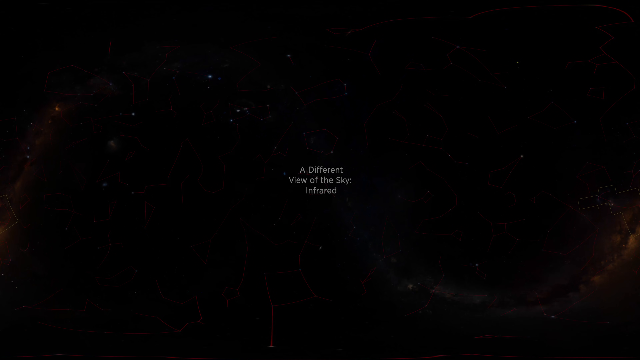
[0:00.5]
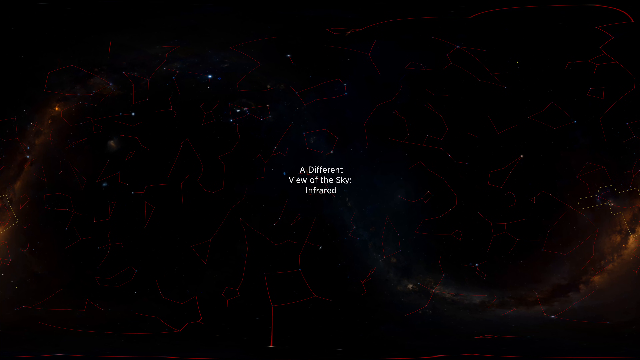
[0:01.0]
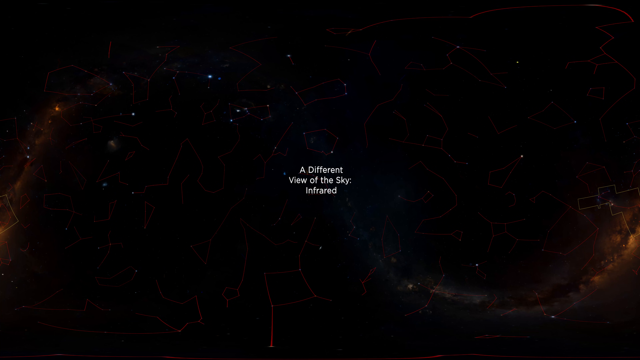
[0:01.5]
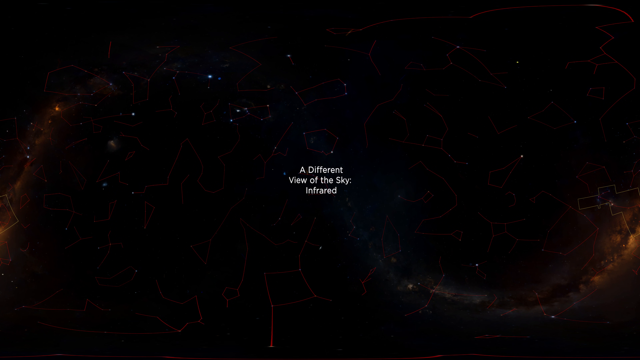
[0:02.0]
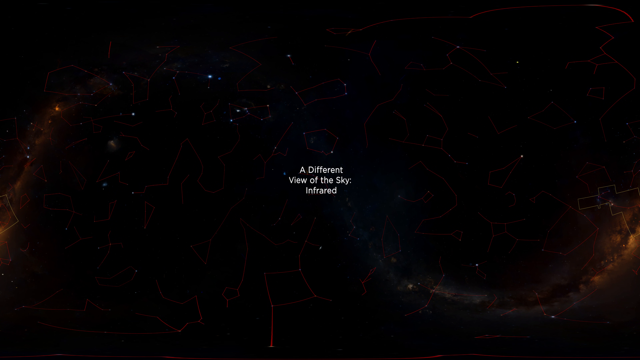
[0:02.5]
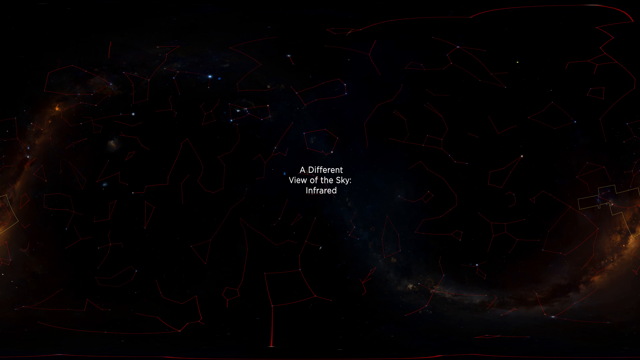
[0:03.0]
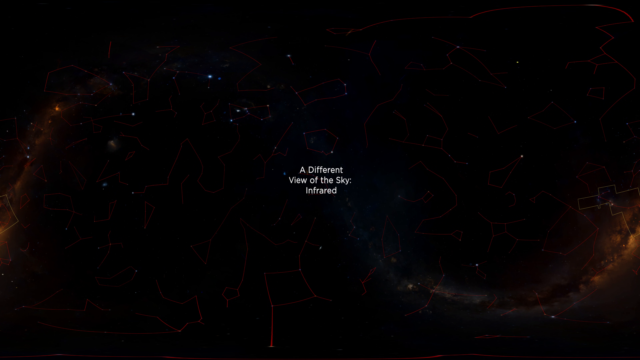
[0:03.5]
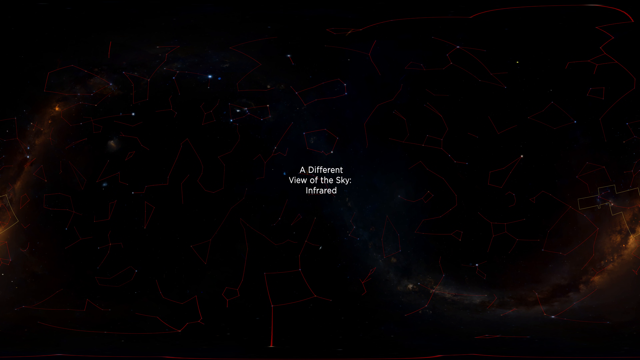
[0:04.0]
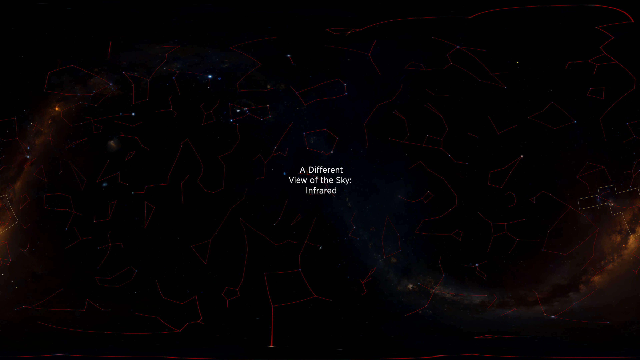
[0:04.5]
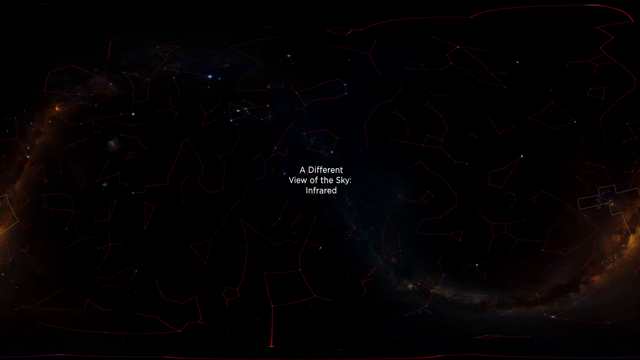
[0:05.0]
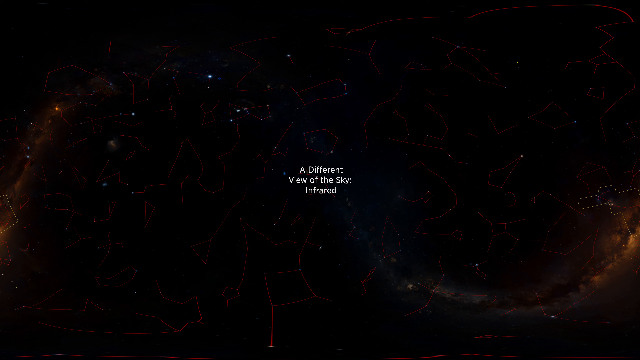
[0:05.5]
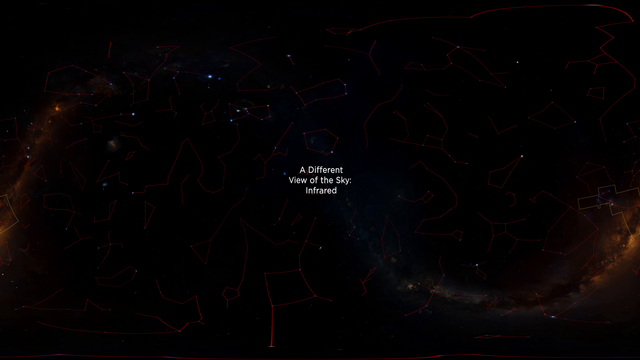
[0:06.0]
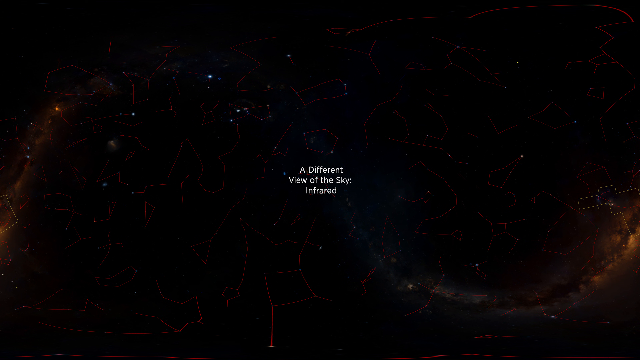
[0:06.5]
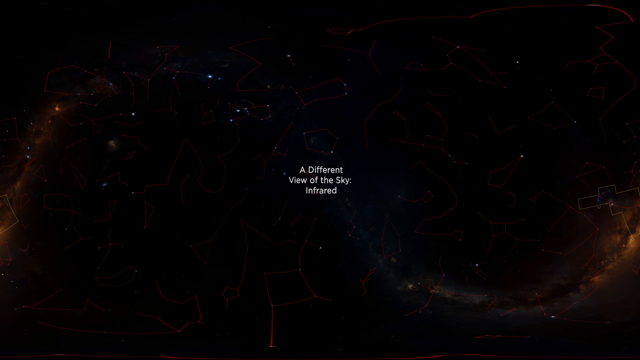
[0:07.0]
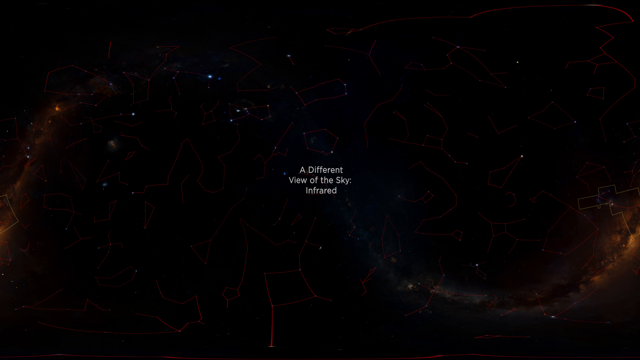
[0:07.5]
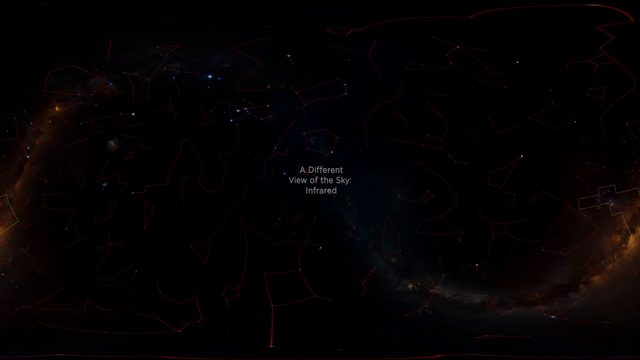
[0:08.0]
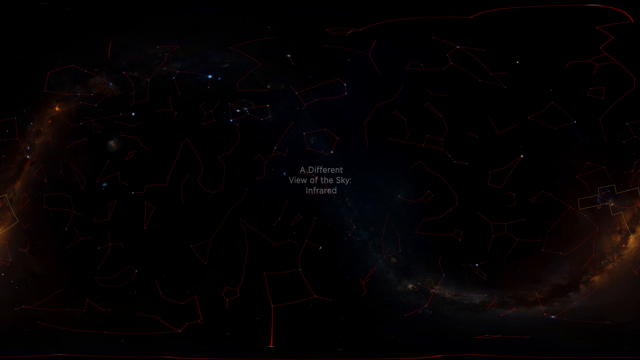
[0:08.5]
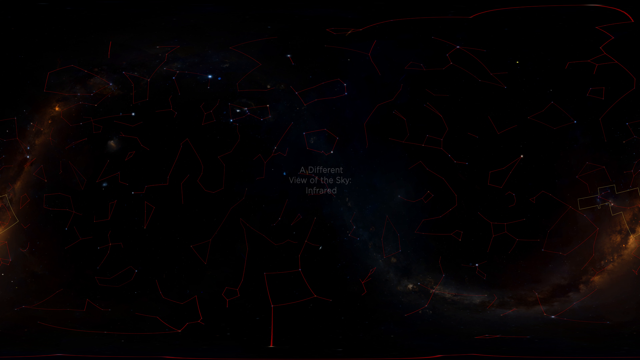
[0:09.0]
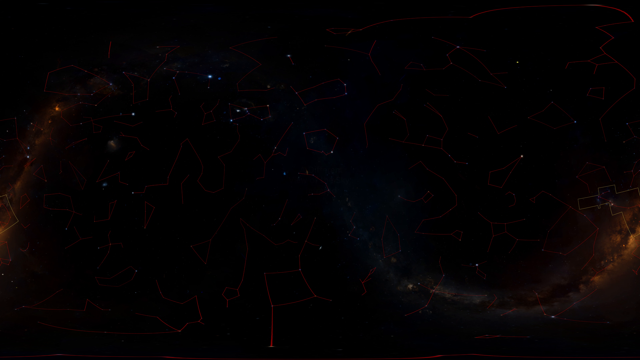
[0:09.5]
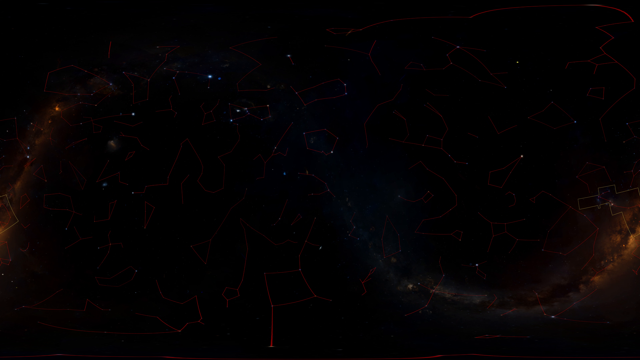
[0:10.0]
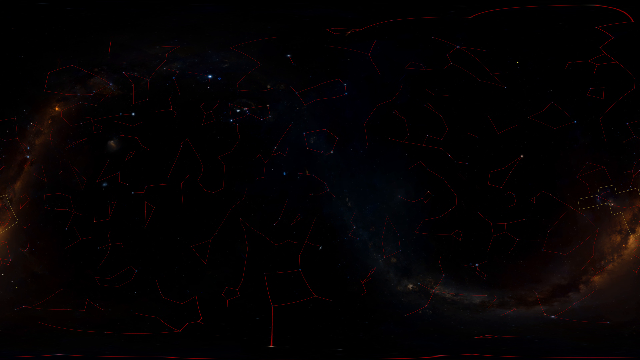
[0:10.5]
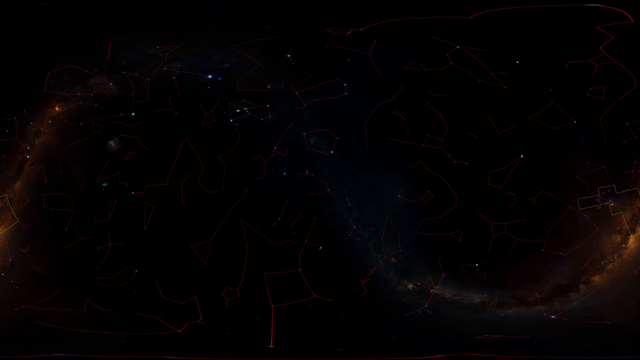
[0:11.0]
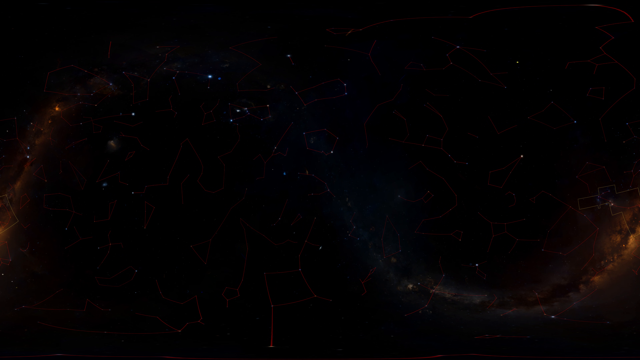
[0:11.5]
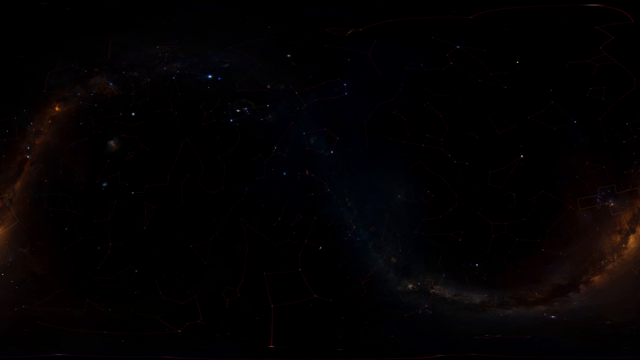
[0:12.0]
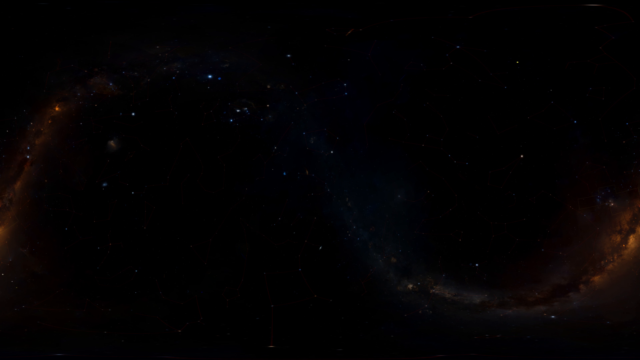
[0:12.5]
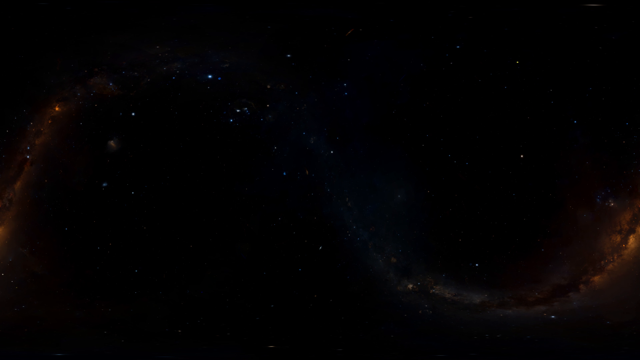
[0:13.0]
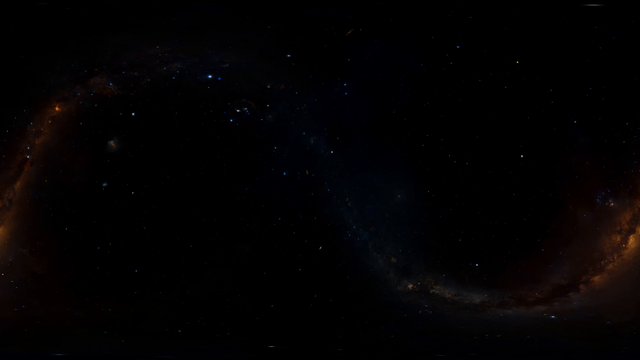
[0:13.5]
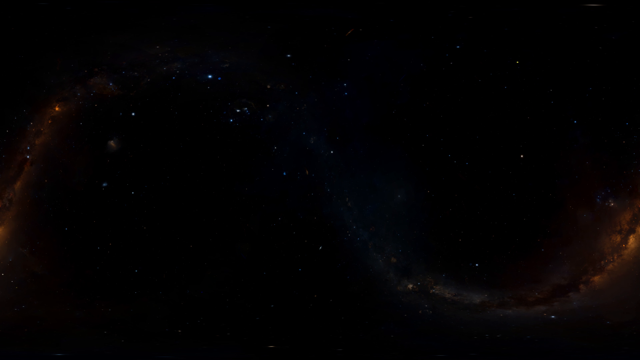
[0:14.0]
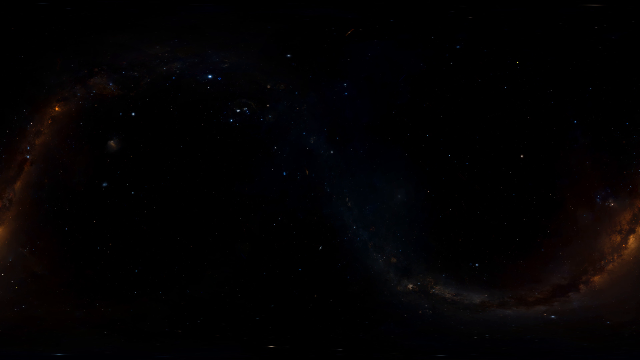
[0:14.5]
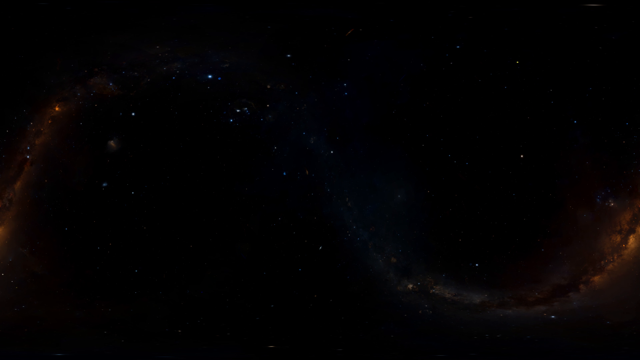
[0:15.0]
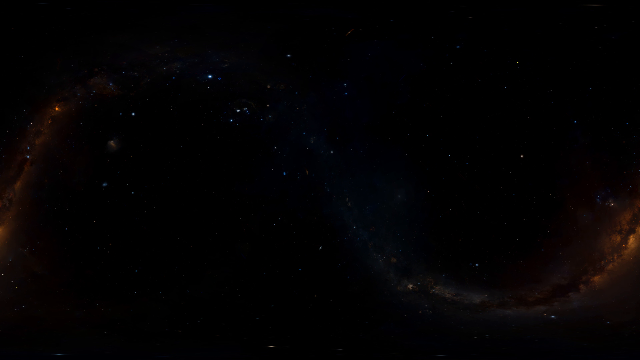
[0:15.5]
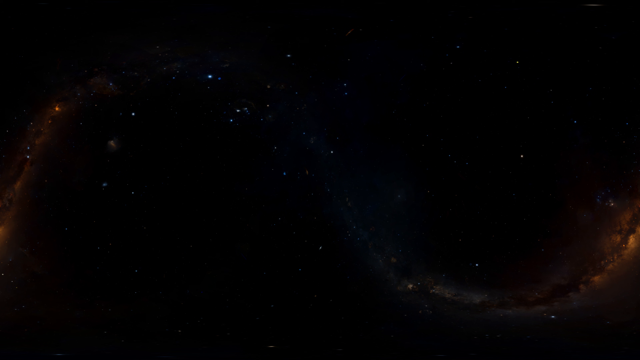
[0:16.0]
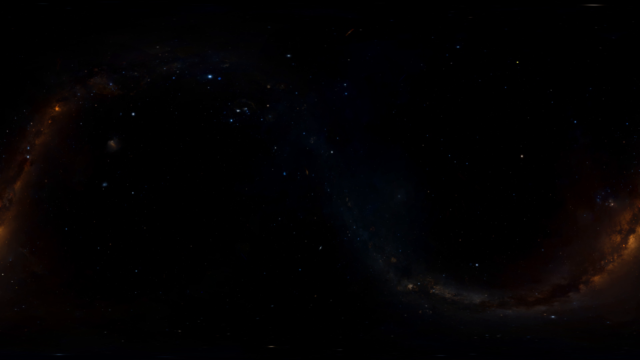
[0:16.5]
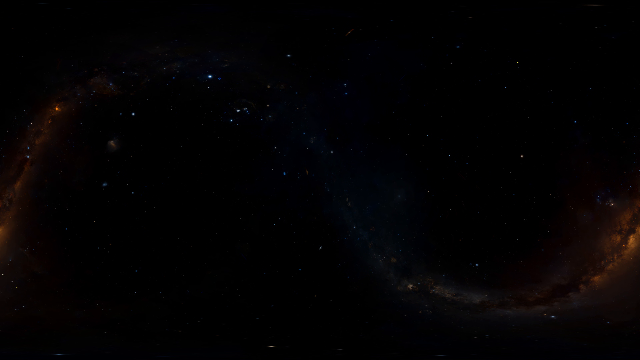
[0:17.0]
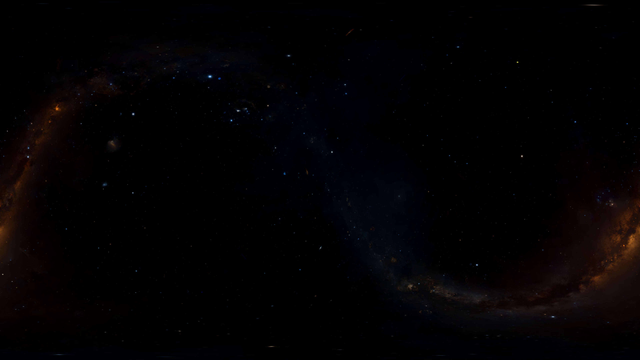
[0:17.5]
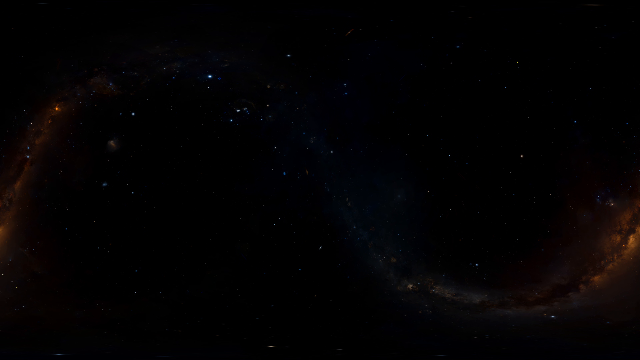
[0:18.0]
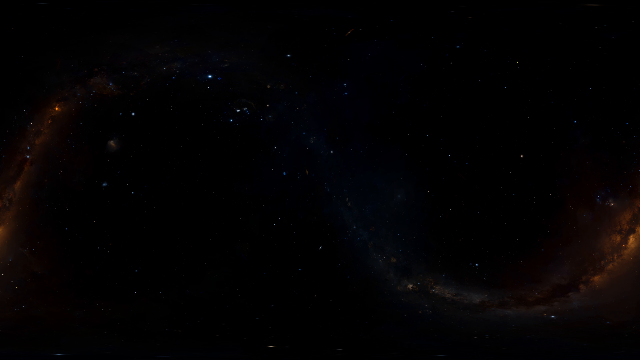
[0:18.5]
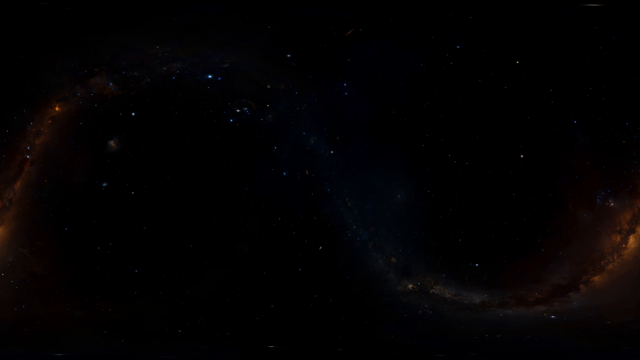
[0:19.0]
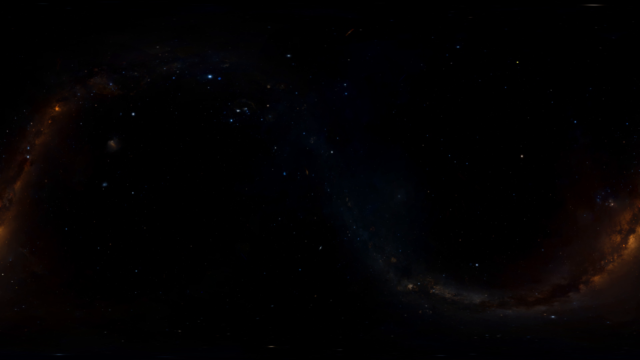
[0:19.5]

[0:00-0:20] A black screen looks like a view of outer space with distant stars. In the middle of the screen, small white text reads "a different view of the sky infrared", arranged in three lines: "a different" on the first line, "view of the sky" on the second, and "infrared" on the third, perfectly centered. The image holds for a few seconds, then the text fades away while the view of outer space continues. In the lower right corner there is what looks like orange gas flames. The other stars in the distance are white; there are not many of them, just faint dots that seem very far away.